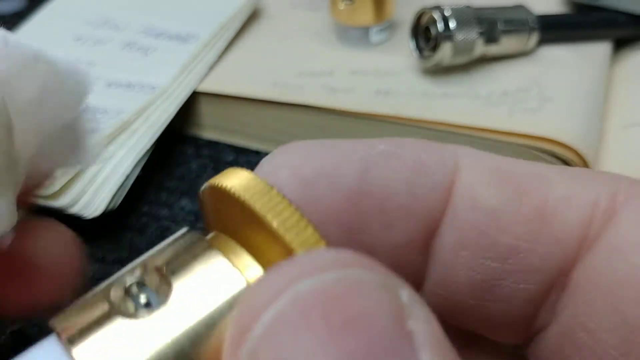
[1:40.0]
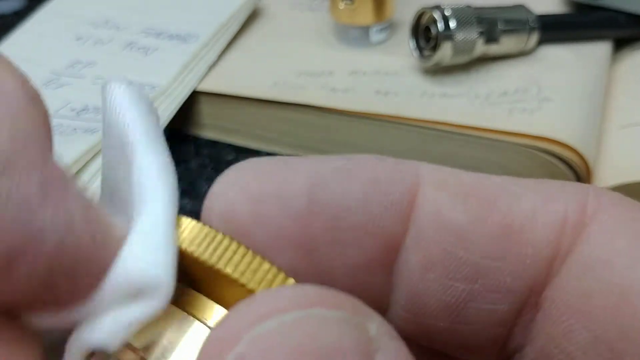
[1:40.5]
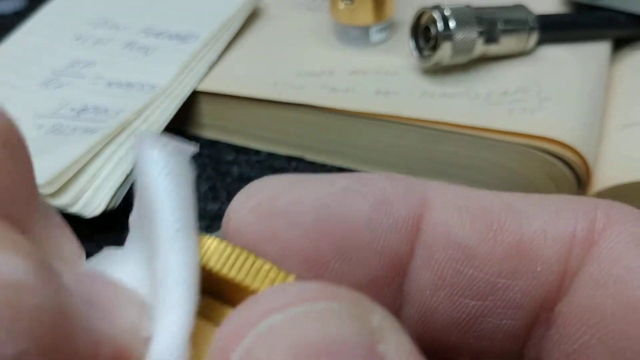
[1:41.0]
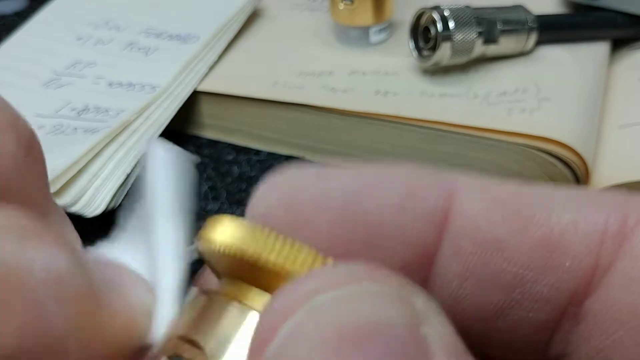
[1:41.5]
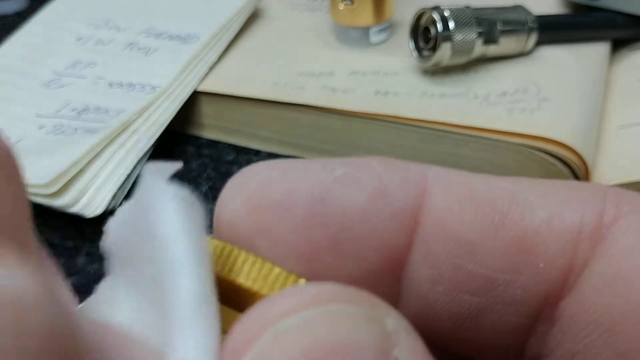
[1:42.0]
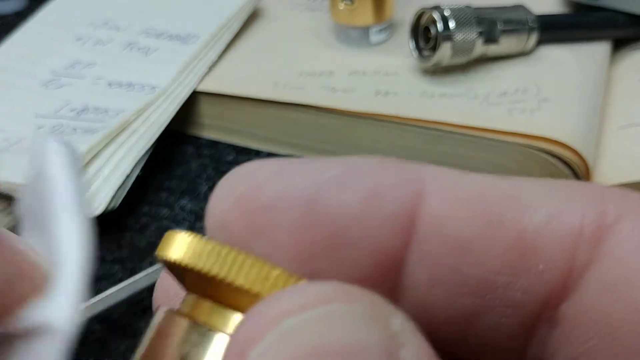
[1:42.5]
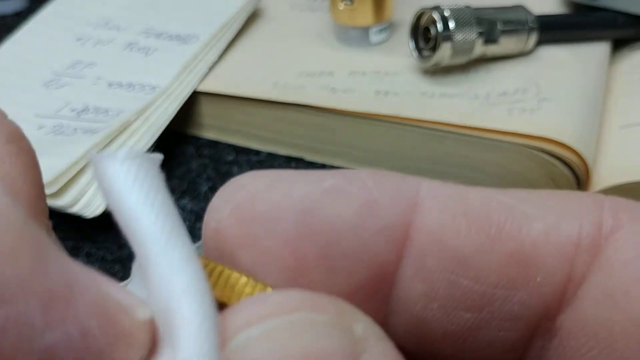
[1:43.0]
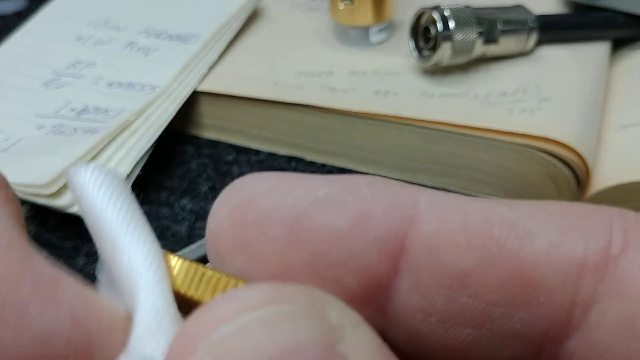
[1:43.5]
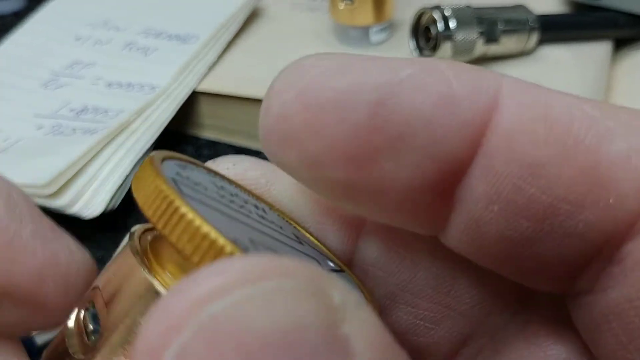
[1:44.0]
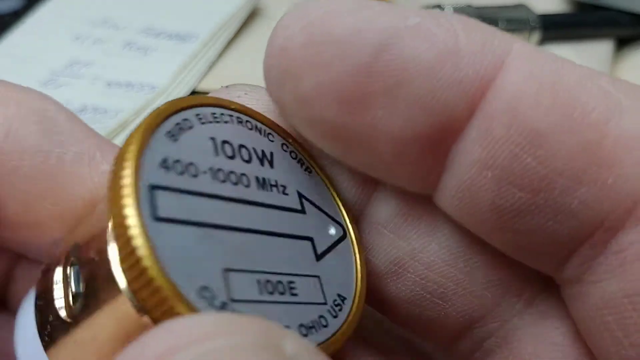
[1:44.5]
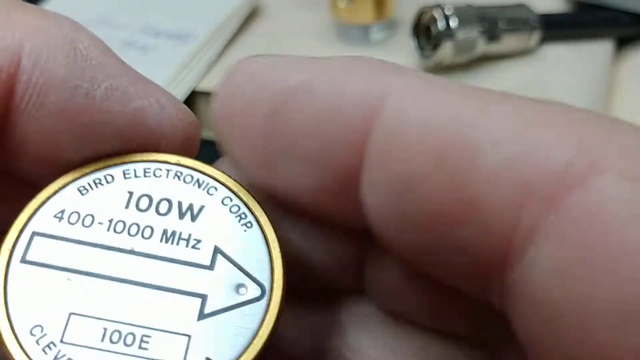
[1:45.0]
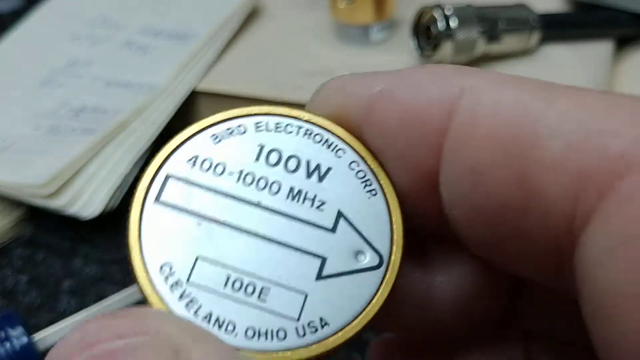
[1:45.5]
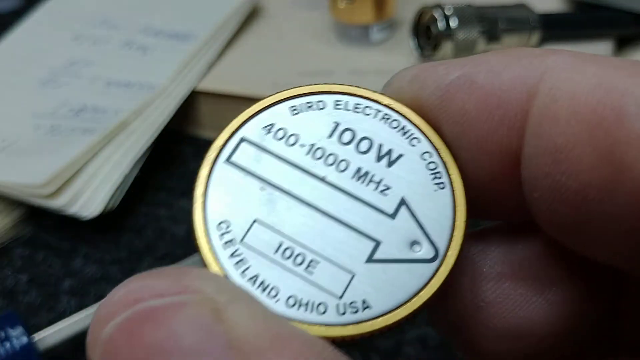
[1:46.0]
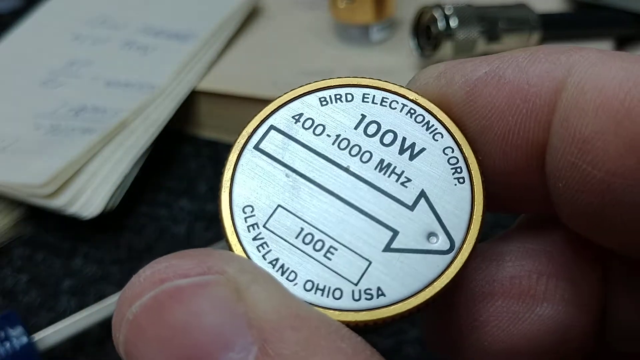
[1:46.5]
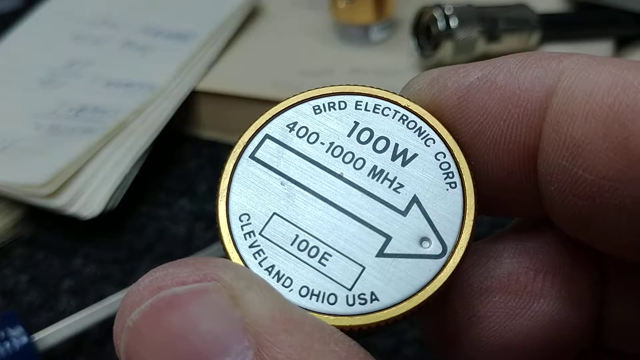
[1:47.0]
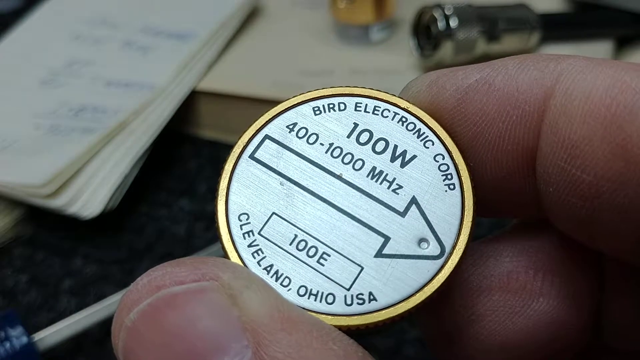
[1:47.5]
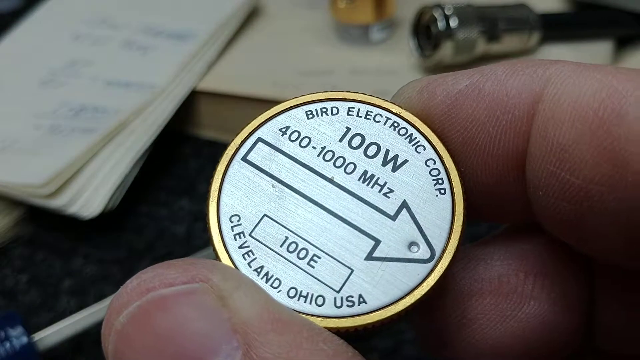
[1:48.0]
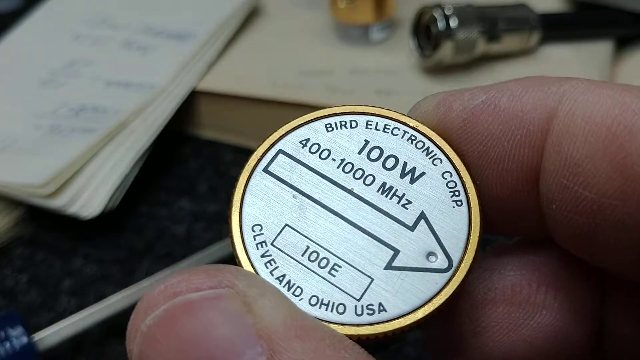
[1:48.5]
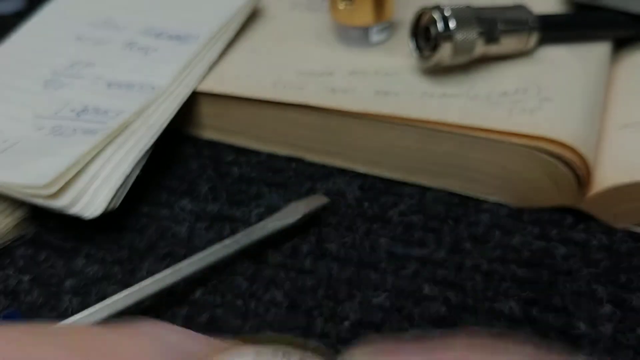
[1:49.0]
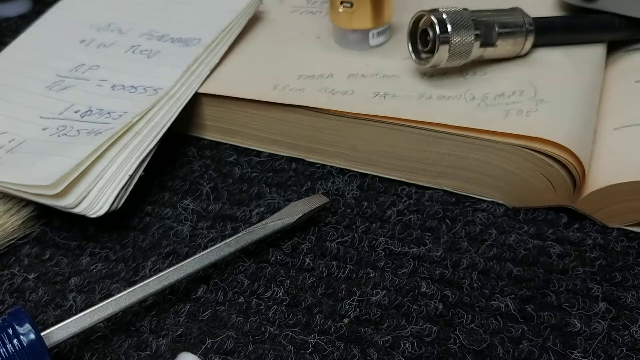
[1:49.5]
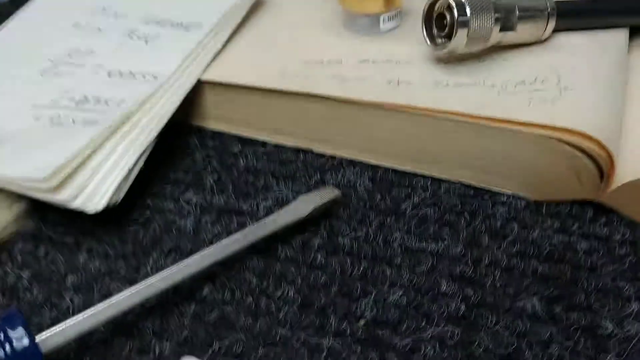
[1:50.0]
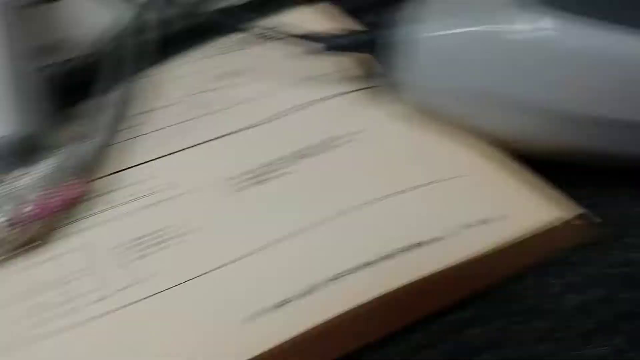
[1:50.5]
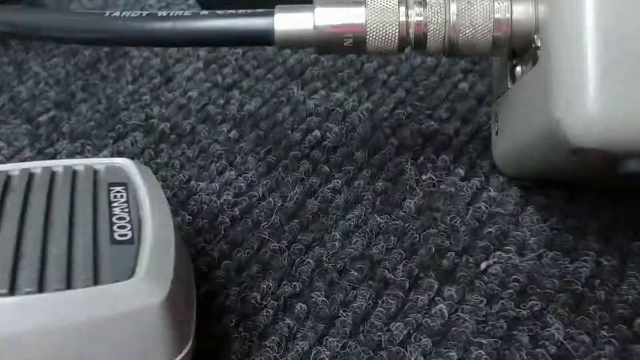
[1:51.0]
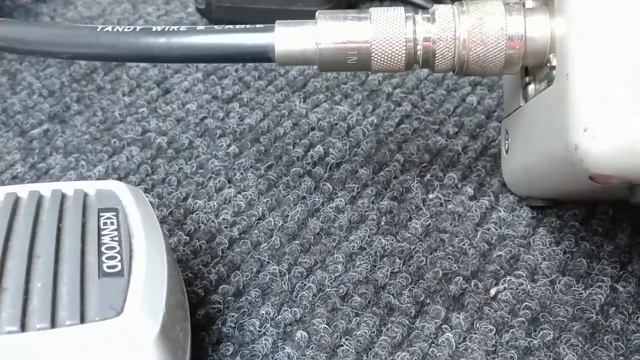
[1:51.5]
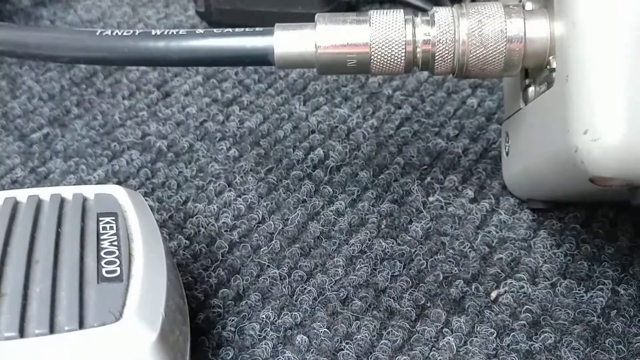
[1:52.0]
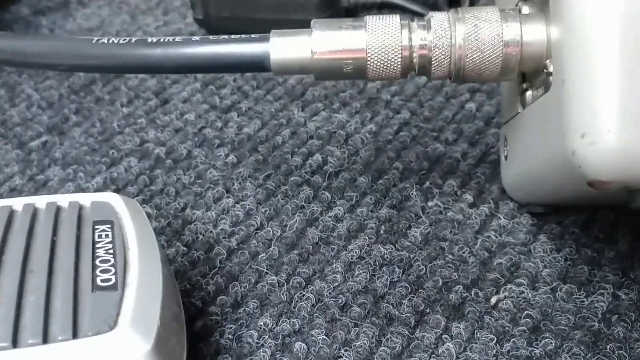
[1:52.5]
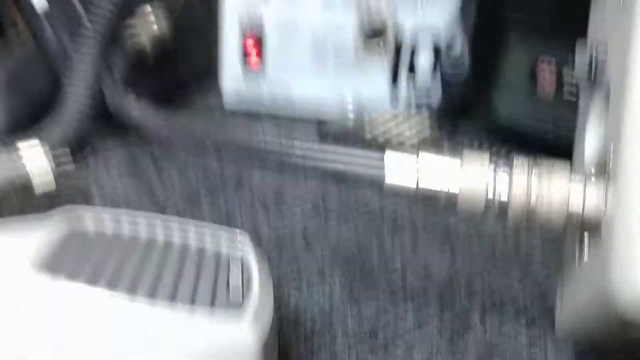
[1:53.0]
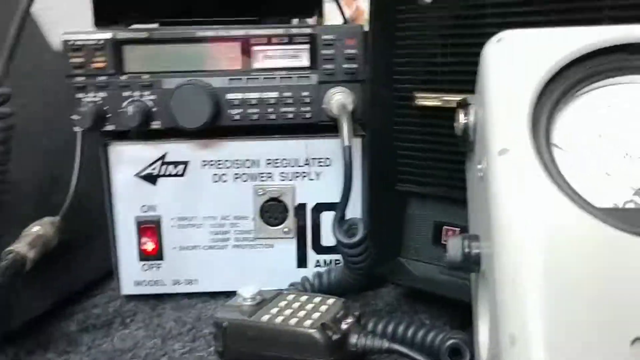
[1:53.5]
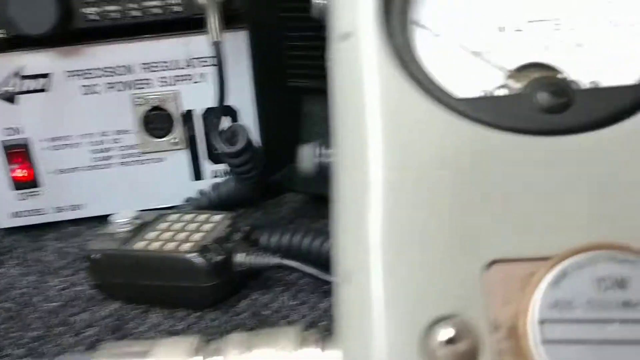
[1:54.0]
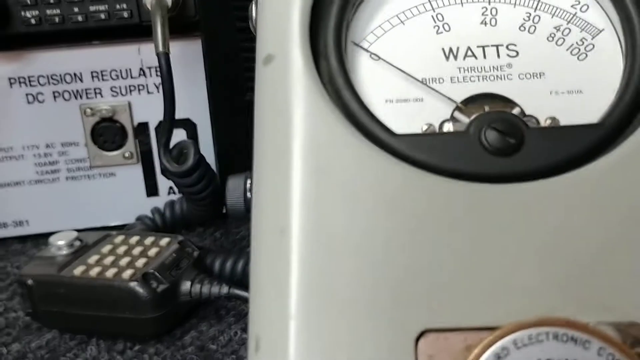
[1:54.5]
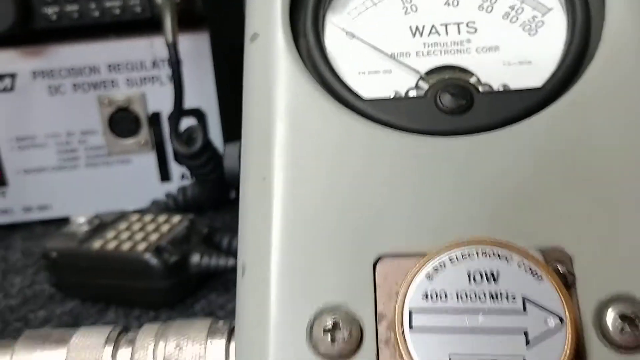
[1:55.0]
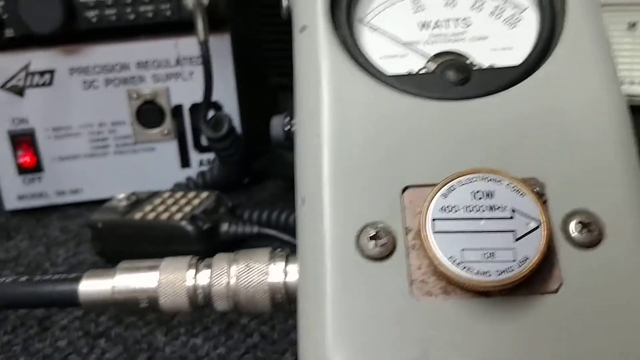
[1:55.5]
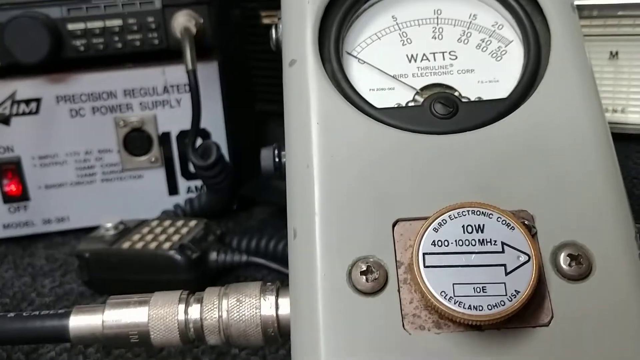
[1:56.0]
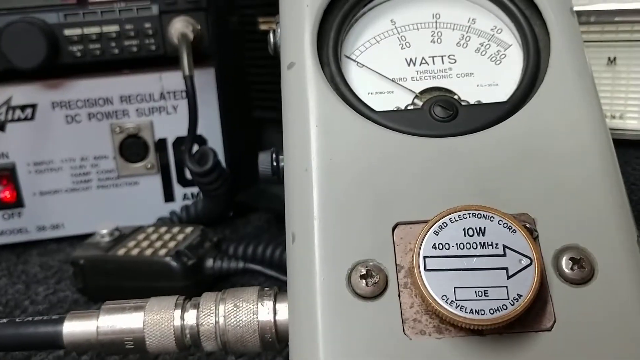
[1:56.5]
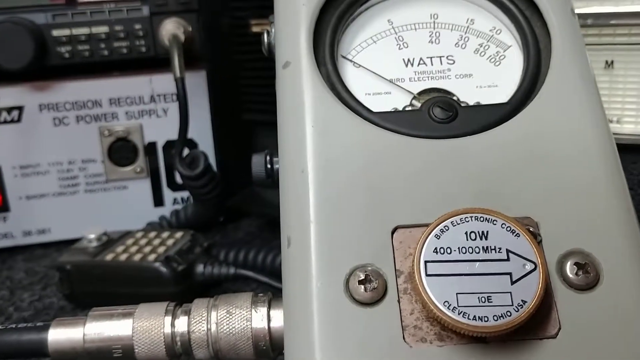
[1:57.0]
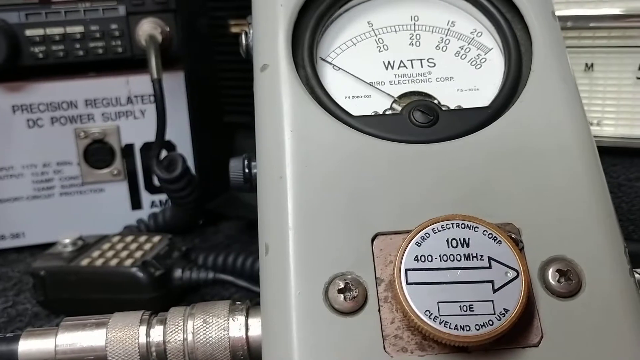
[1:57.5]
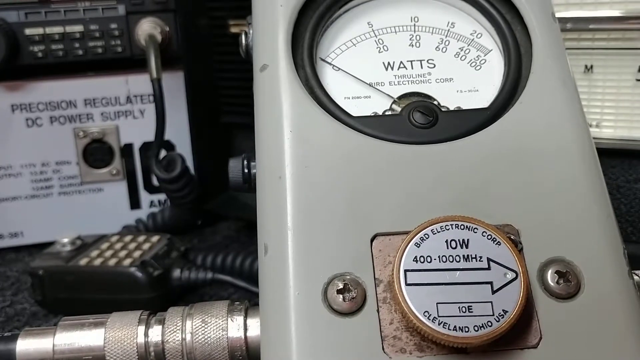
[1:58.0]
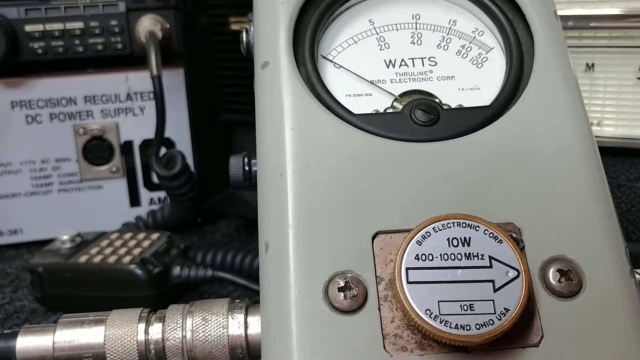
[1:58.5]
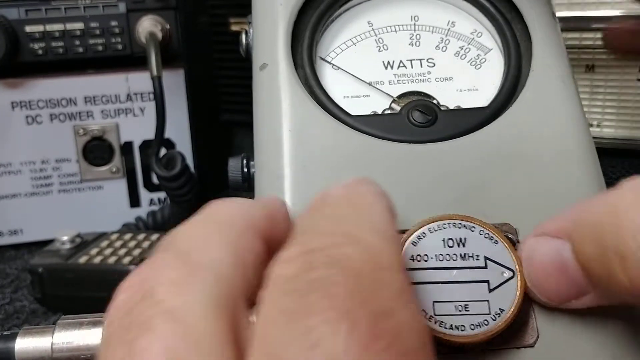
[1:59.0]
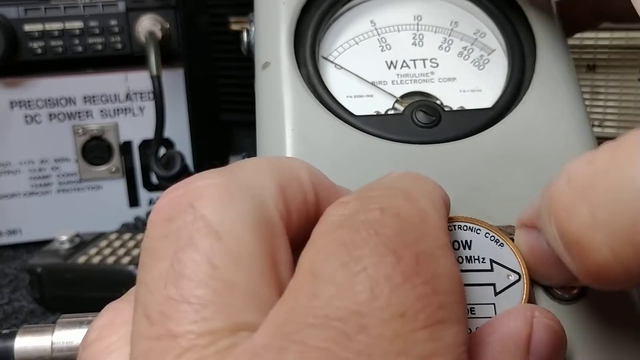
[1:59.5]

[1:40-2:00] A person holds an object that looks like it has a gold gear on top, attached to a gold cylinder, with a plastic container visible underneath the gold metal. With the left hand they hold a white tissue and seem to rub the gold metal part, apparently cleaning it. They then show a different angle, revealing the top of the container, which says "bird electronic" and "400-1000 megahertz", with an arrow pointing to the right. The top of the container is silver and all the wording is black. They take the object away from the camera, and the camera pans to the right, showing a tube connected to a device that looks white and made of metal.